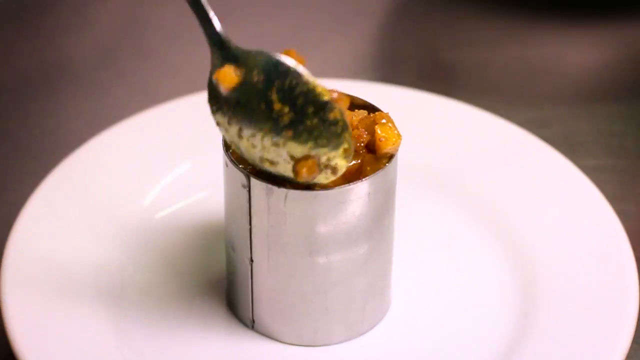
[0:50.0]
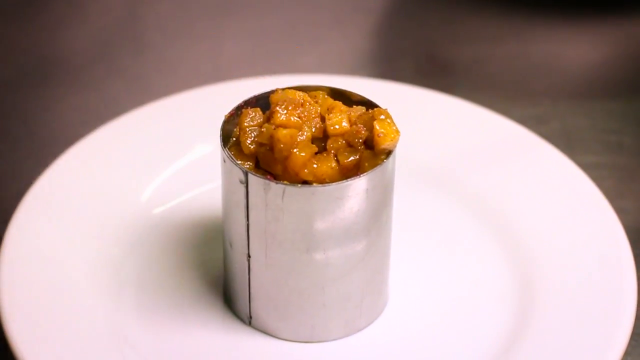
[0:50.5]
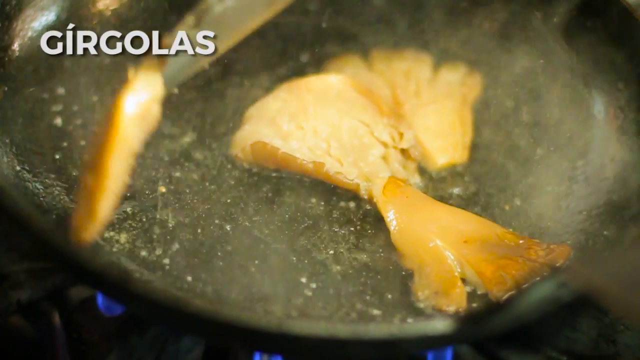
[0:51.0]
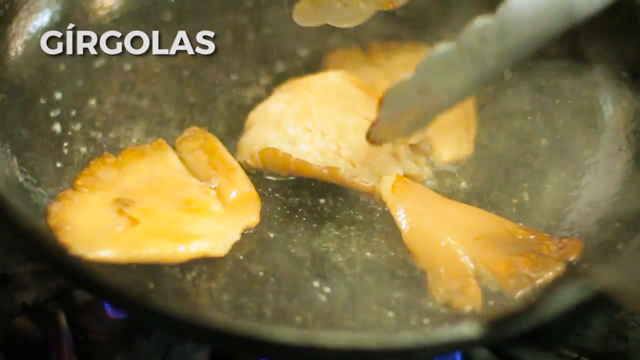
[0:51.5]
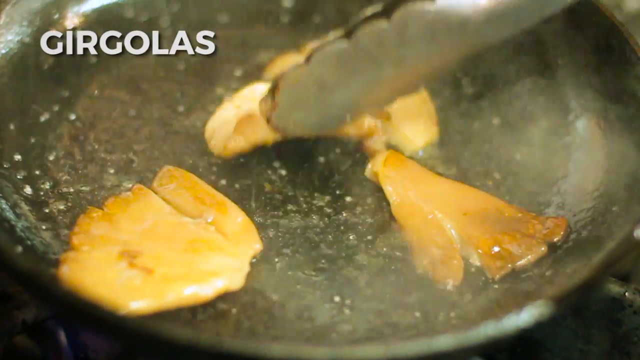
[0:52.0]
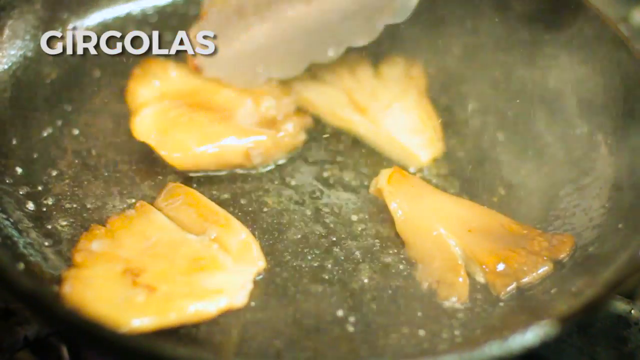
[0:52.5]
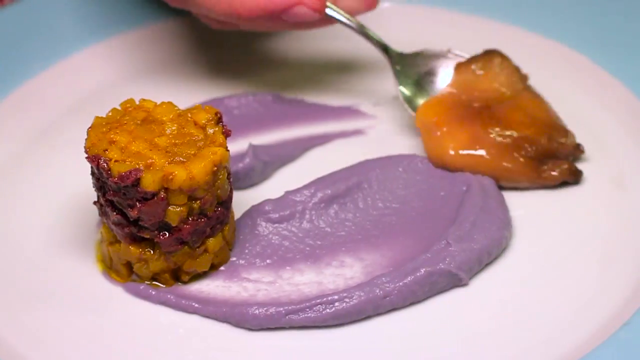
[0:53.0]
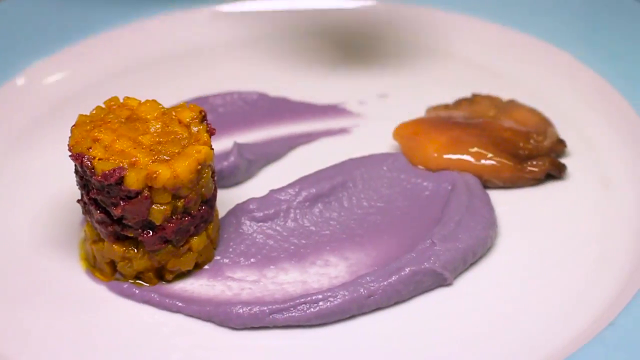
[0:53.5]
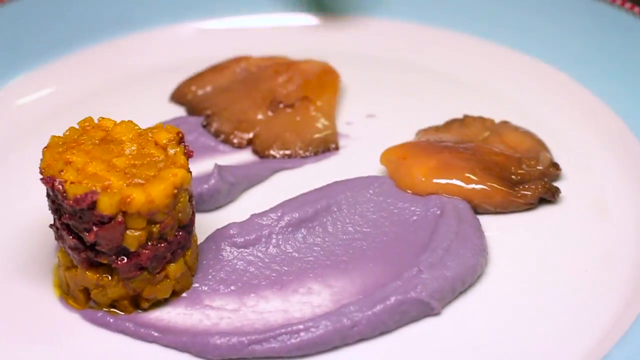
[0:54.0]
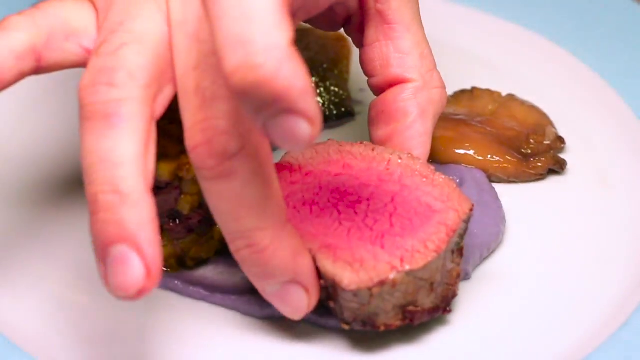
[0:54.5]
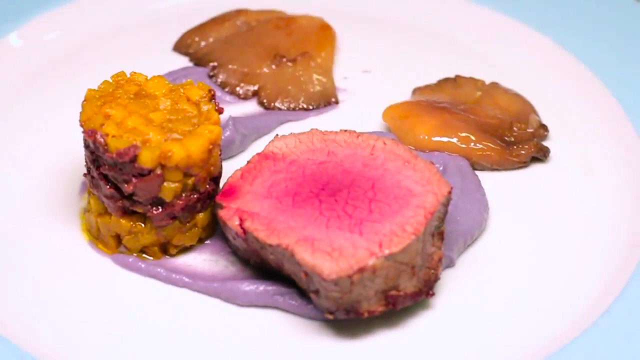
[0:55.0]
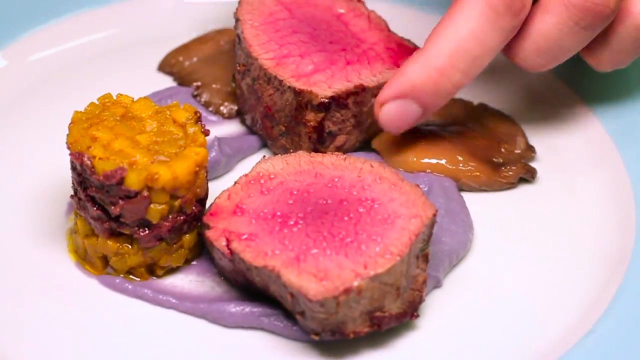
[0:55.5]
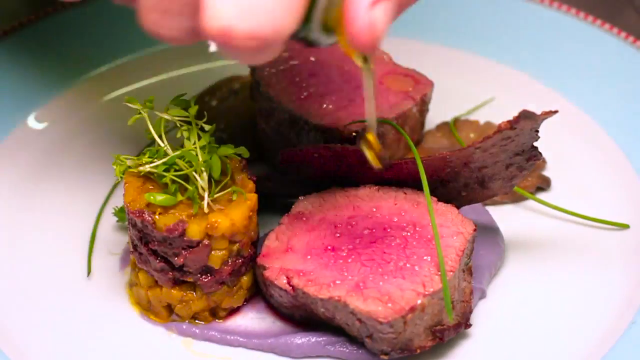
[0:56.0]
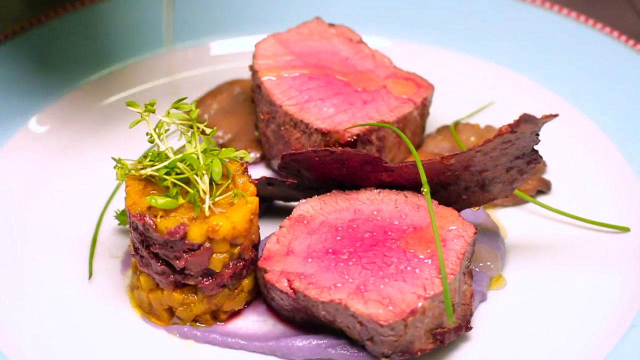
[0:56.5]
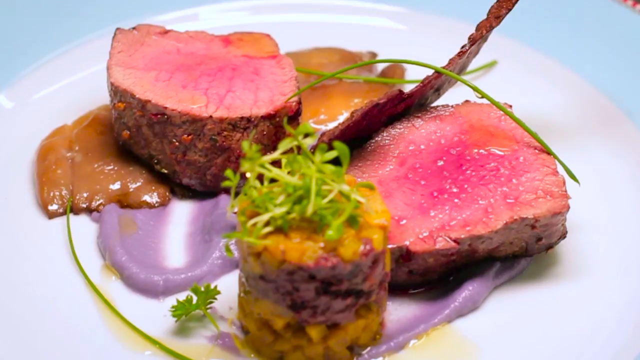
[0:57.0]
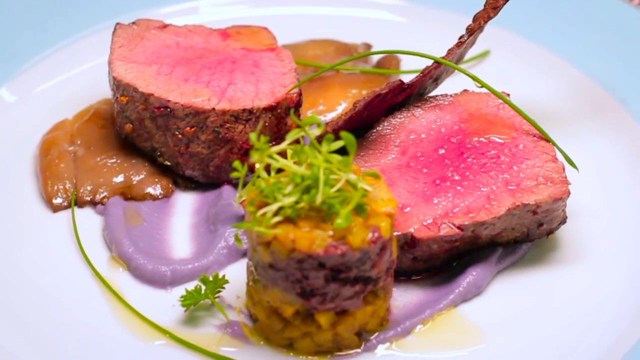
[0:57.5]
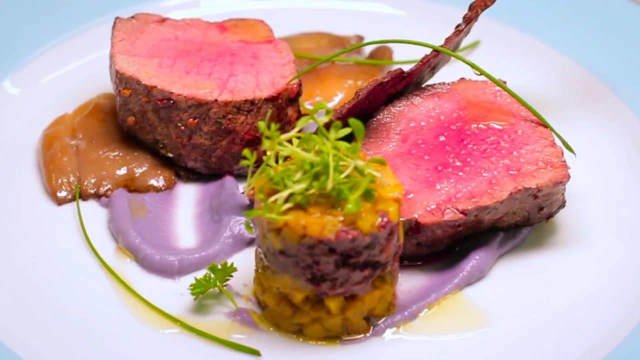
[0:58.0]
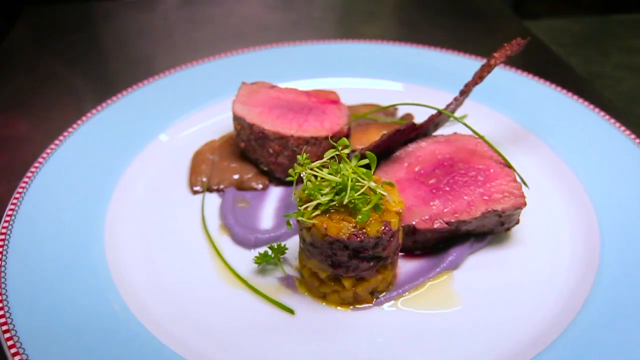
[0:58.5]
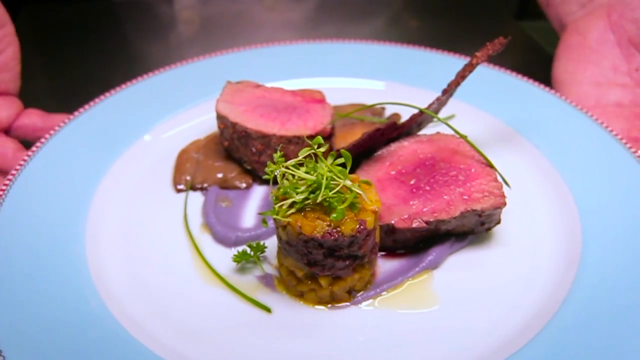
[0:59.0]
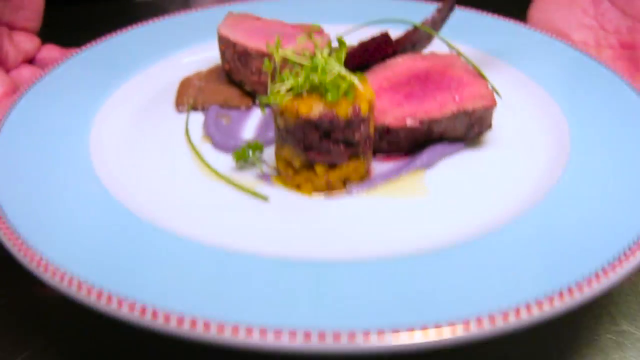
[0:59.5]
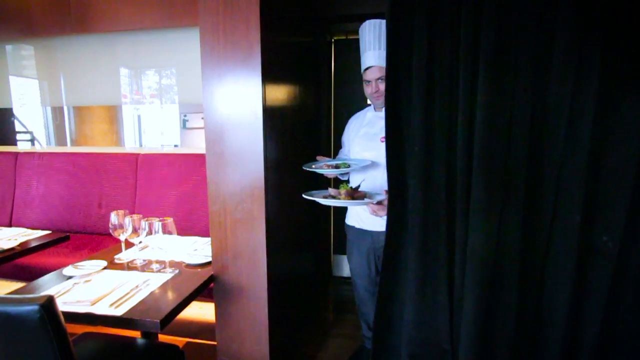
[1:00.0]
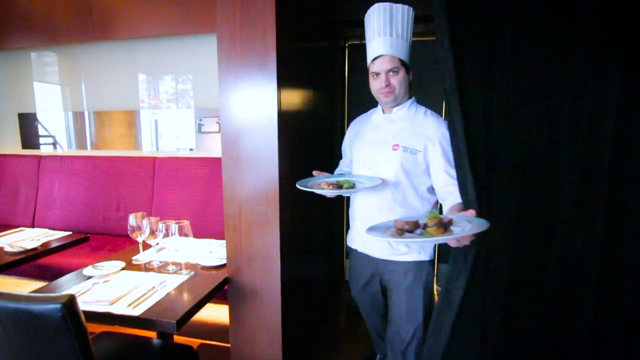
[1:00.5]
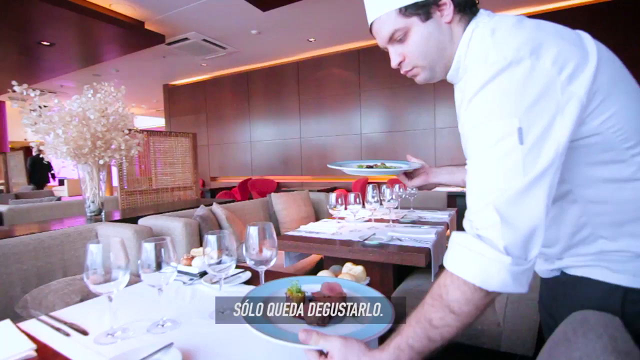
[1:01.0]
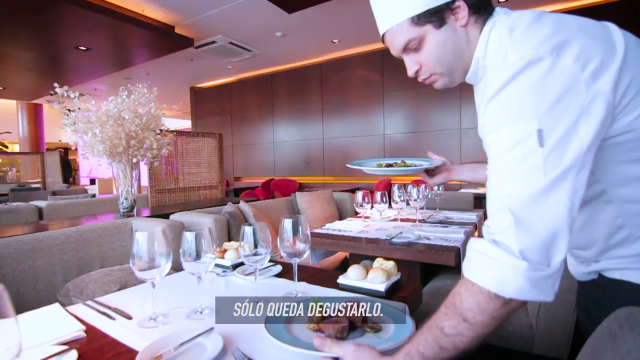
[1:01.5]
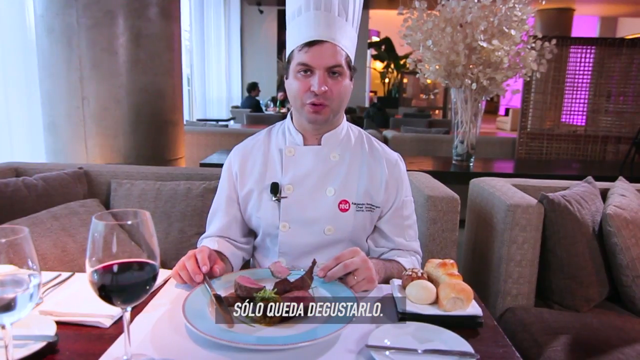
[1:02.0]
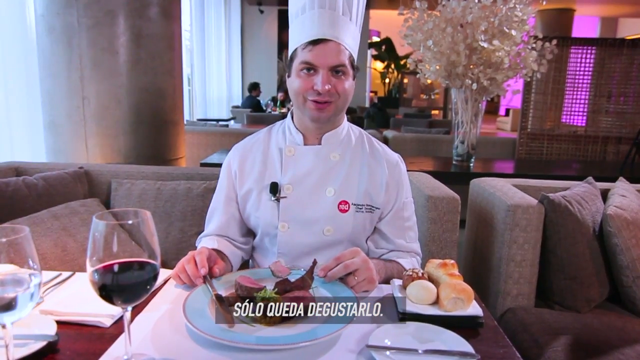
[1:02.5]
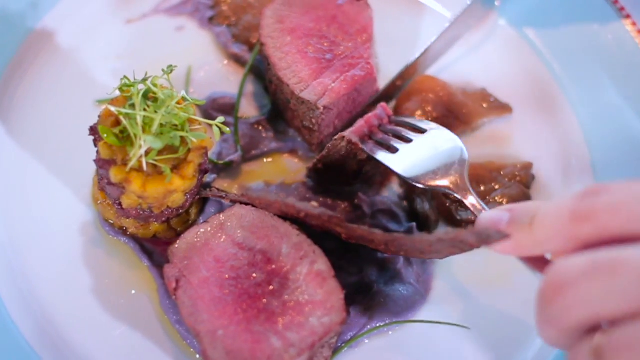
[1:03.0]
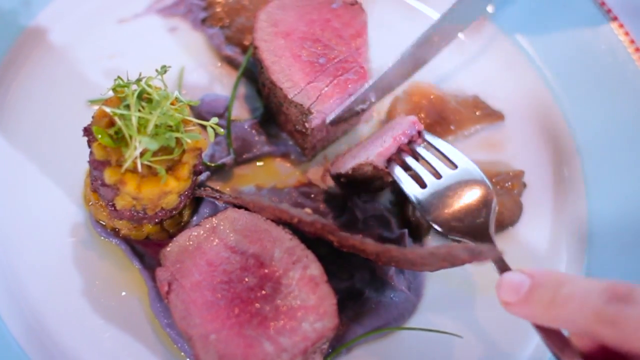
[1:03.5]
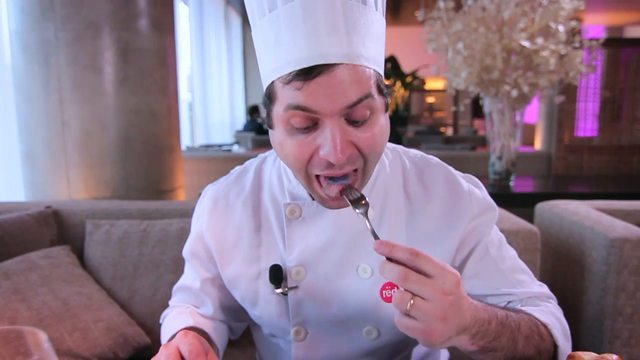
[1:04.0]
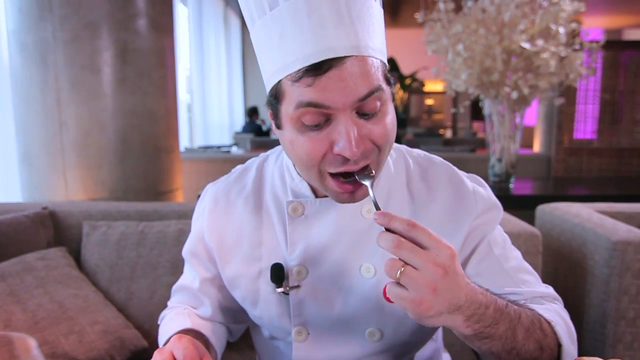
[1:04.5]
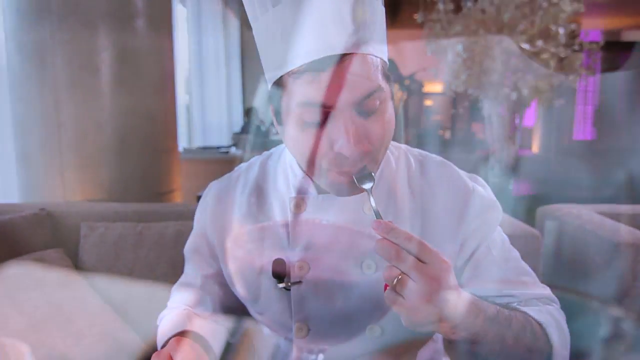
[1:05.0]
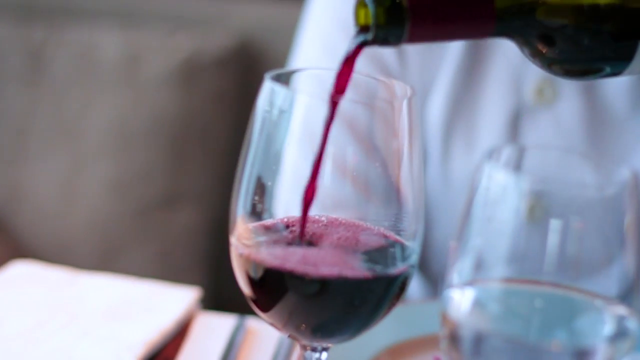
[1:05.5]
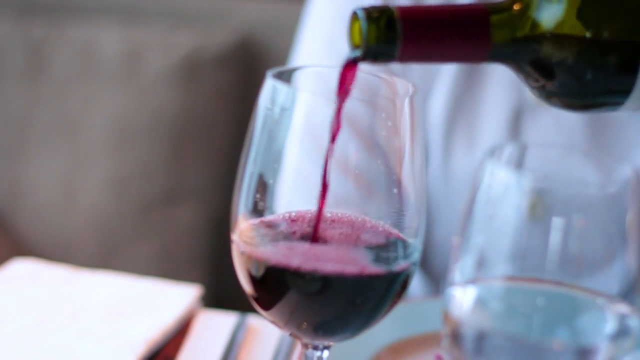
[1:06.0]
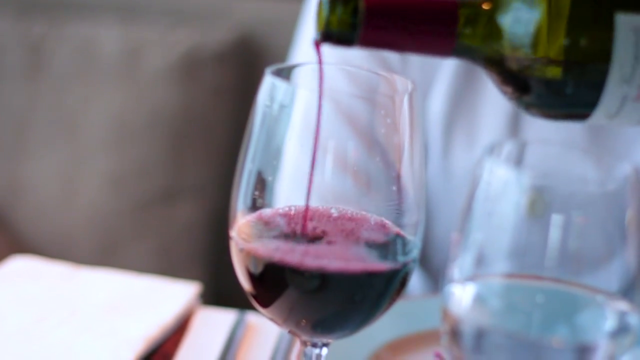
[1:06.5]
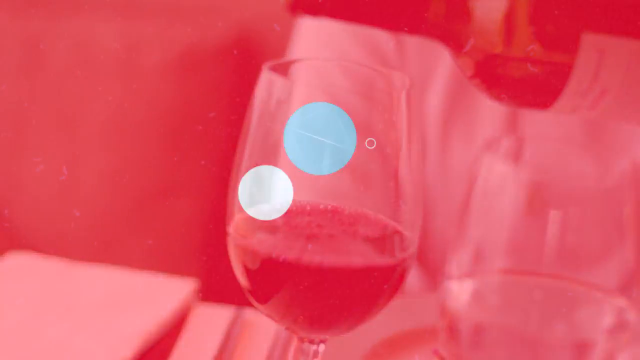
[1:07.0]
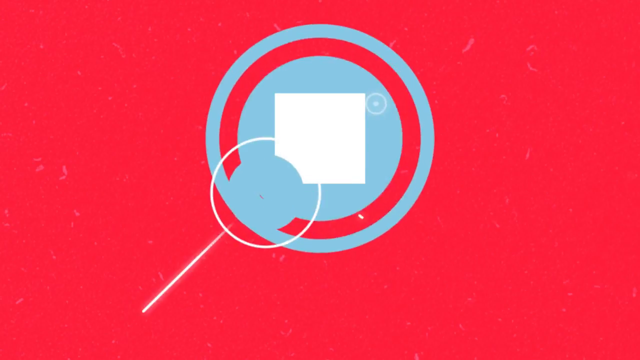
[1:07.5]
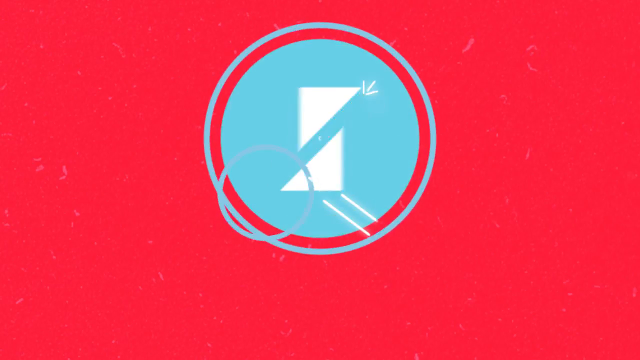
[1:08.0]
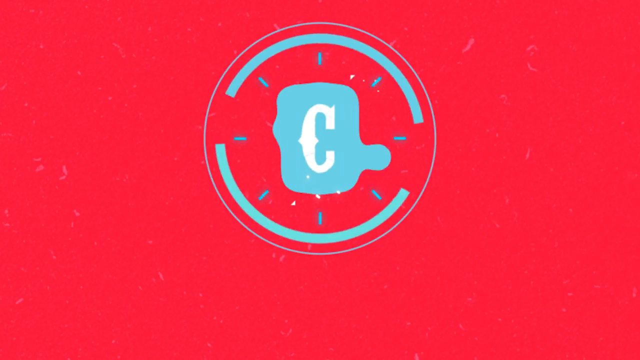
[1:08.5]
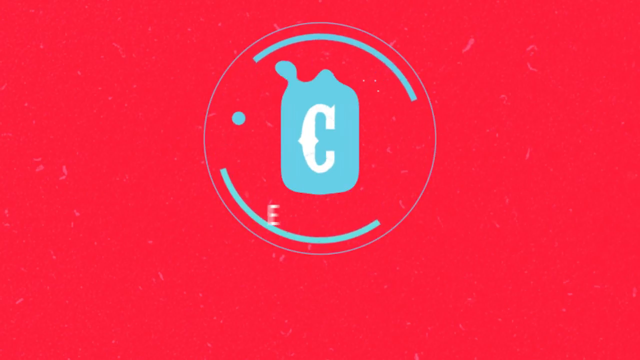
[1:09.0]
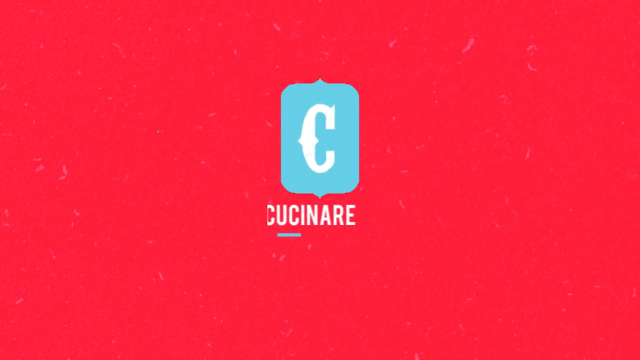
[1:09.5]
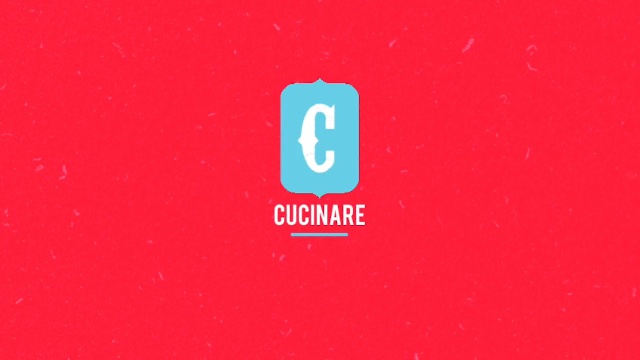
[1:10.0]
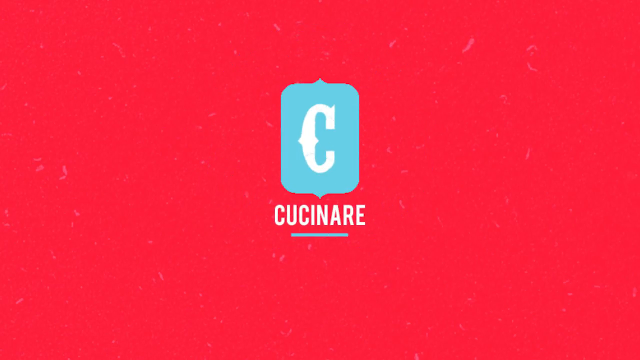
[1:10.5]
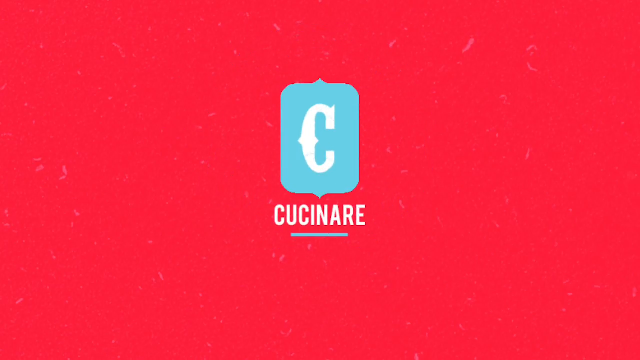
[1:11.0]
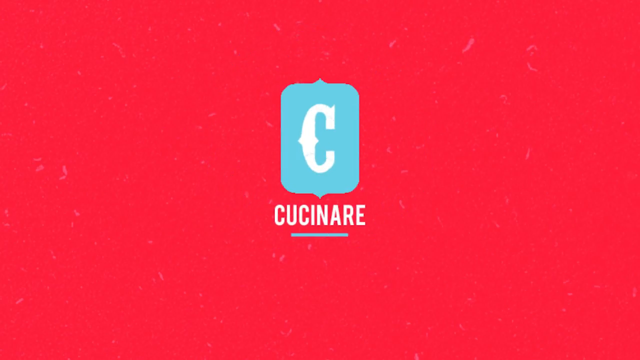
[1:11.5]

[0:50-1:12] The chef builds the blood sausage tower mixed with apple pieces. He pan fries oyster mushrooms until golden brown and places two pieces on the plate, along with two cuts of meat that look medium rare and the blood sausage and apple tian, or tower. He adds some olive oil and some garnish, and the plate is done. He takes both plates, puts them on the table, and eats, cutting a slice of the veal and biting into it with a fork, paired with red wine. The video ends with the company's logo and name against a red background.